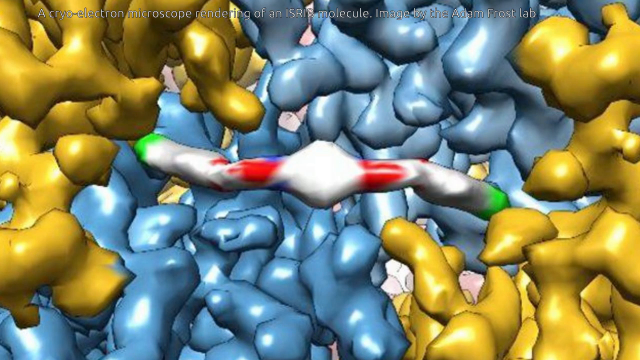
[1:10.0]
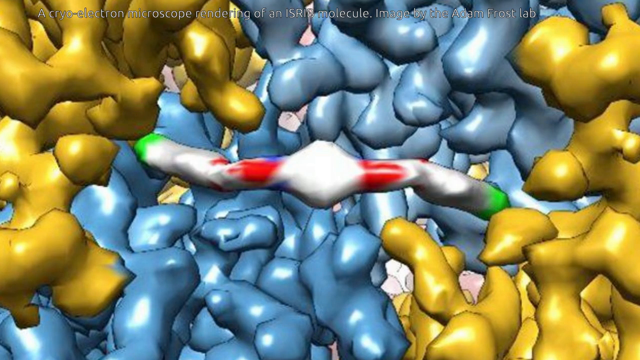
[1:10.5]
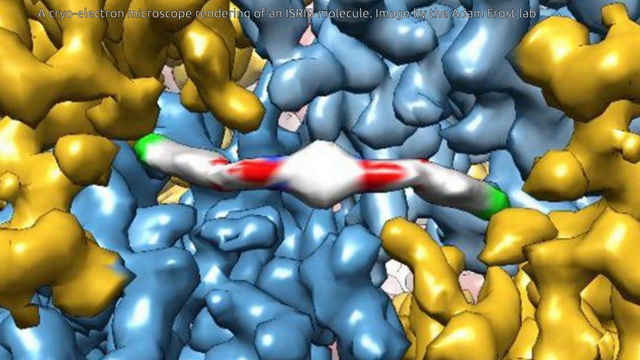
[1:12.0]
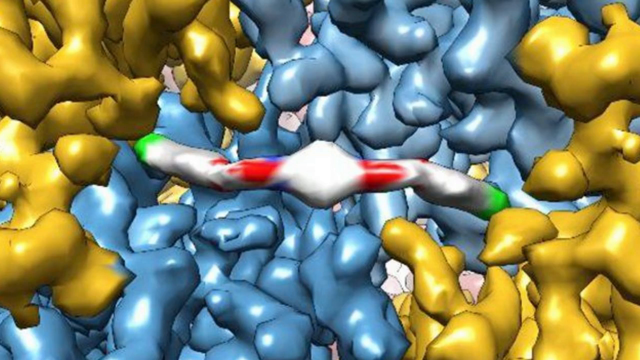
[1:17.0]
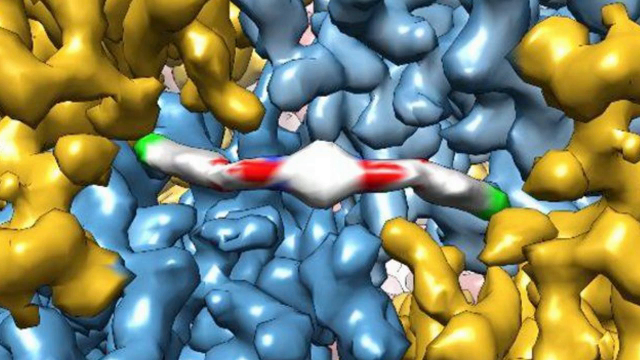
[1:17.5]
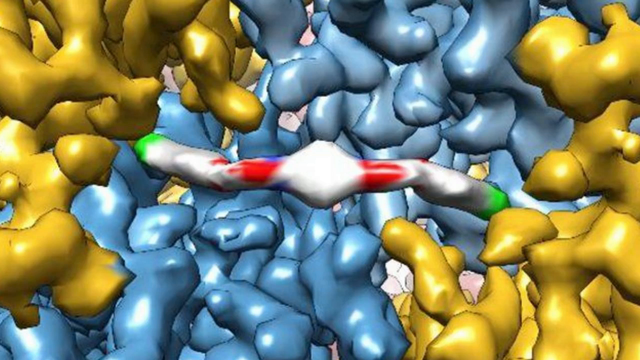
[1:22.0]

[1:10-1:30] The graphic of blue and yellow clusters with the band in the middle remains on screen. At the very top, in very tiny white script, it reads "a cryo-electron microscope rendering of an ISRIS molecule" and "image by the Axum Frost Lab". There is an area of yellow to the left; the clusters are blue, a gray-blue in the middle, and a mustard-like golden yellow on the right and left. The white tube is irregularly shaped, bumpy and lumpy, with a bulge in the middle and some red and green highlight.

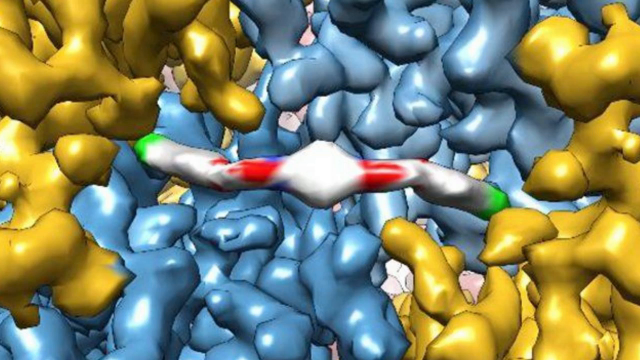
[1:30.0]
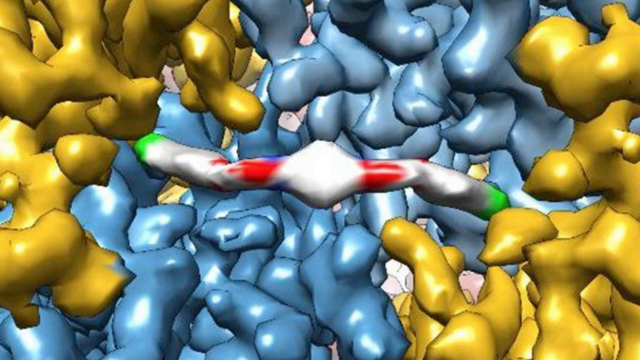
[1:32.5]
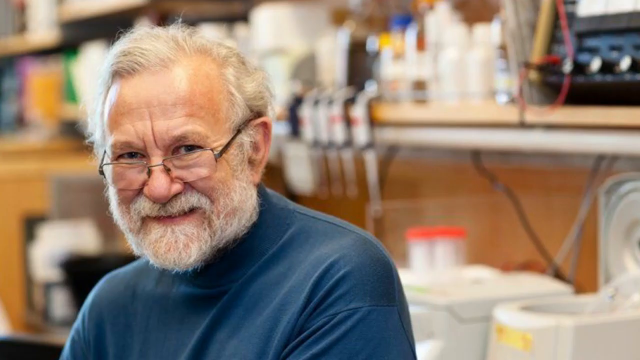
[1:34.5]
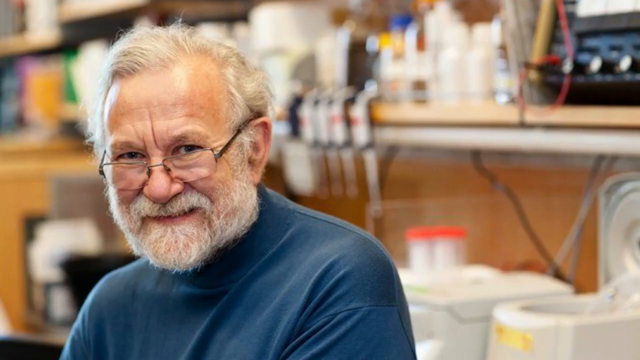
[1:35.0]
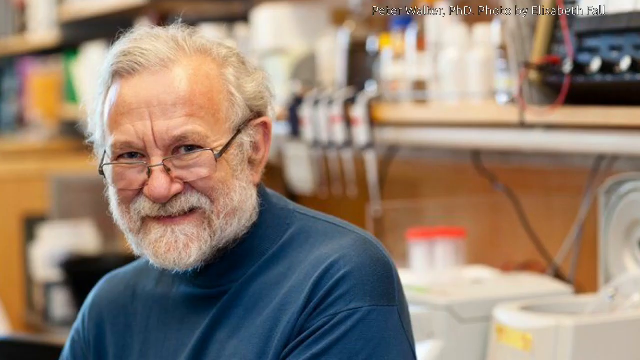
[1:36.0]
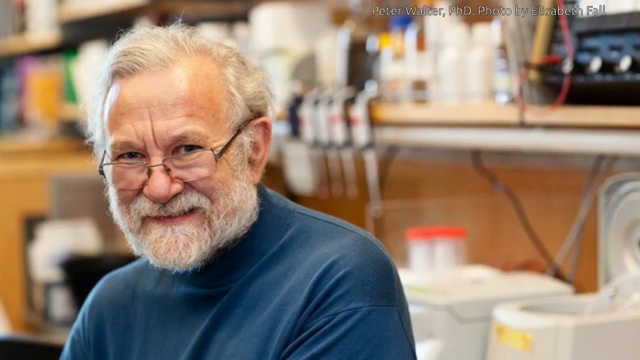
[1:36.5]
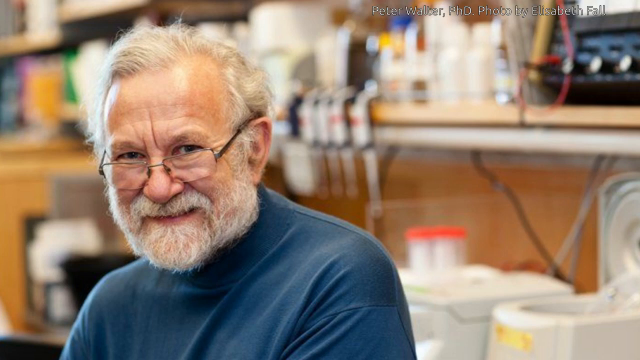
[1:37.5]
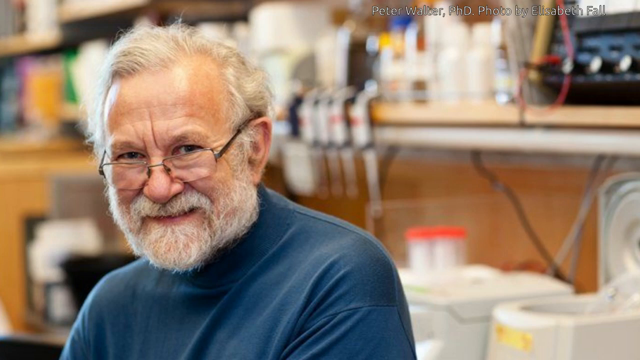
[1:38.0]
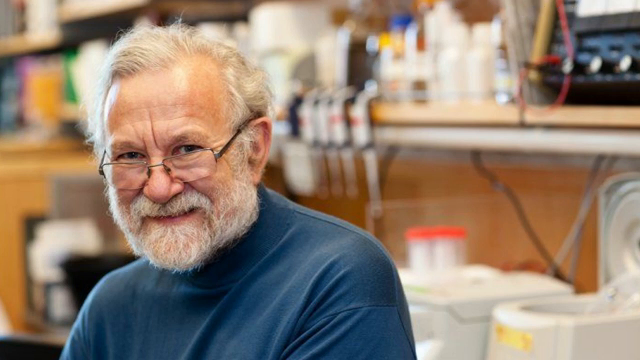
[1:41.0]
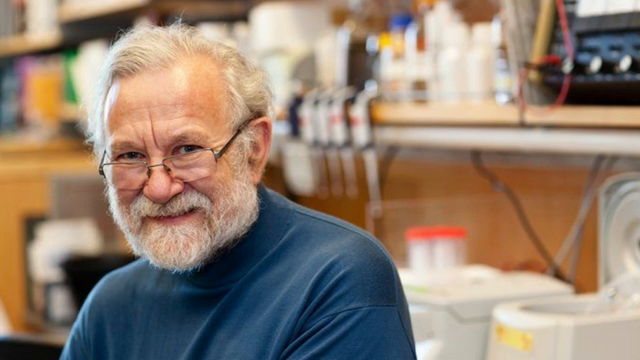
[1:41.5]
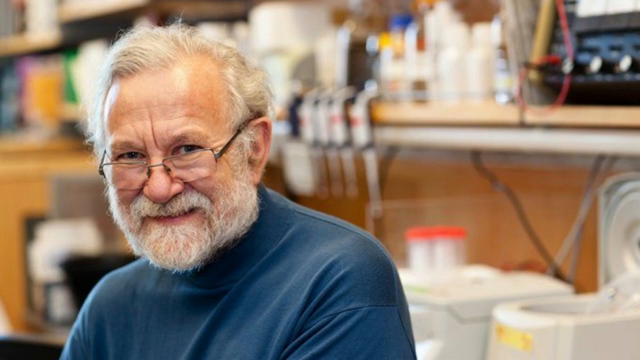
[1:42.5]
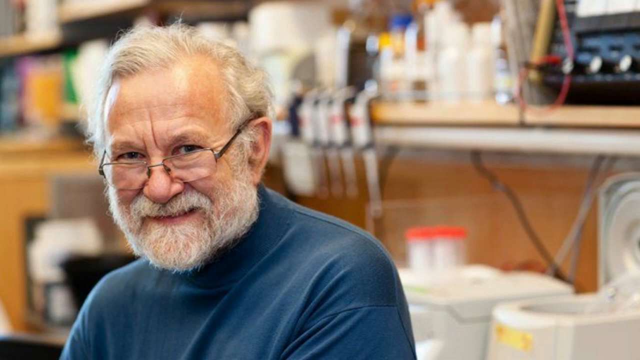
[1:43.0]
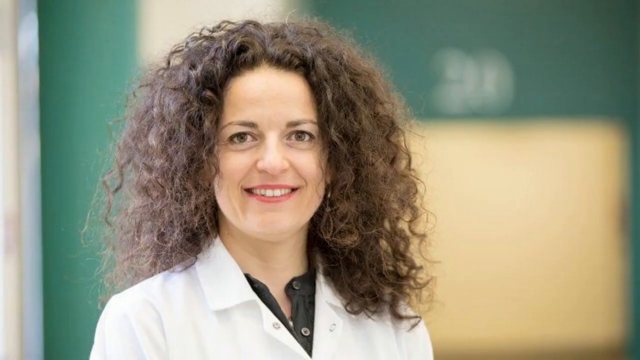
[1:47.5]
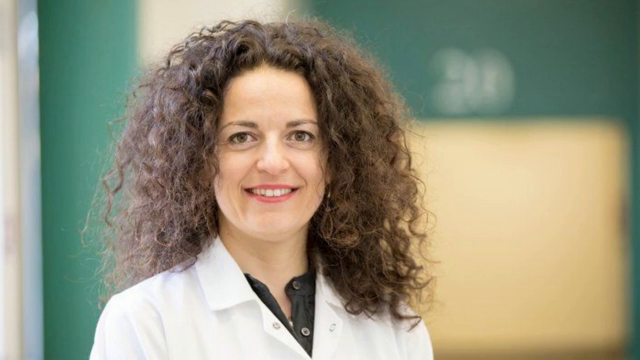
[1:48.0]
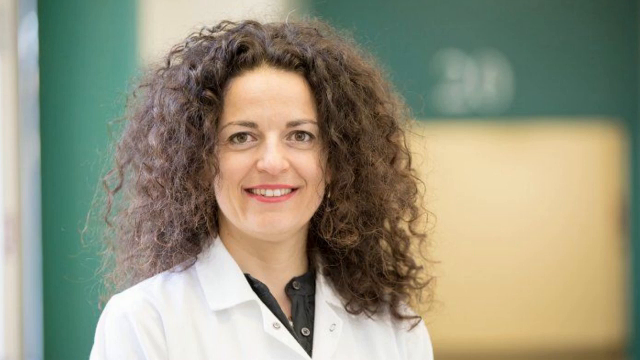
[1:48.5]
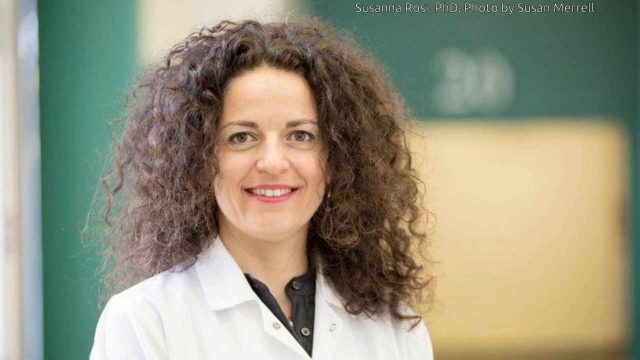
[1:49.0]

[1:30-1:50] The molecule picture gives way to a photo of a smiling man with gray hair, probably about 65 to 70 years old, with a white beard and mustache and wire glasses, looking over the top of them. He wears a darker blue tank top turtleneck and is on the left side of the image. He is possibly in an office, with an out-of-focus background of things typically seen in a lab or office. The video then switches to a picture of a smiling, happy-looking Caucasian woman with frizzy dark brown hair, slightly left of center. Her very curly, frizzy hair is parted in the middle and comes down on either side to just below her shoulders. She has red lipstick and dark eyes and wears a white lab coat over a black button-down shirt, shown from the shoulders up. Behind her is a blurry, out-of-focus green background with a yellowish triangle or rectangle to her right. A little sunlight comes in from the left, lightening that side.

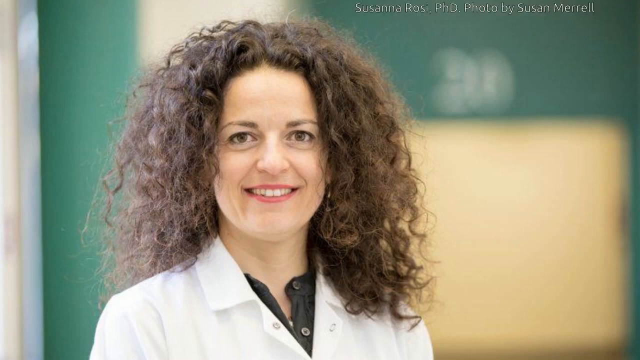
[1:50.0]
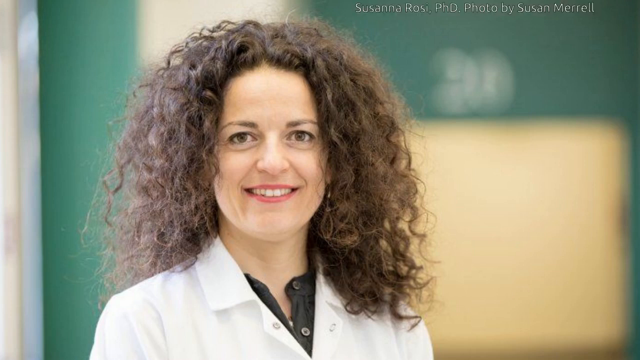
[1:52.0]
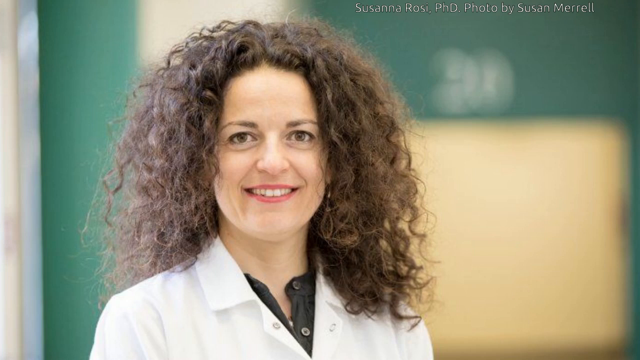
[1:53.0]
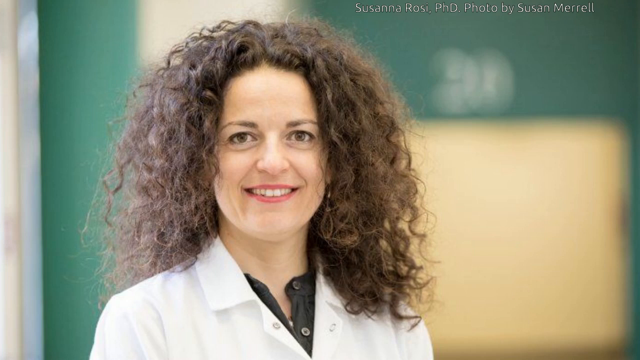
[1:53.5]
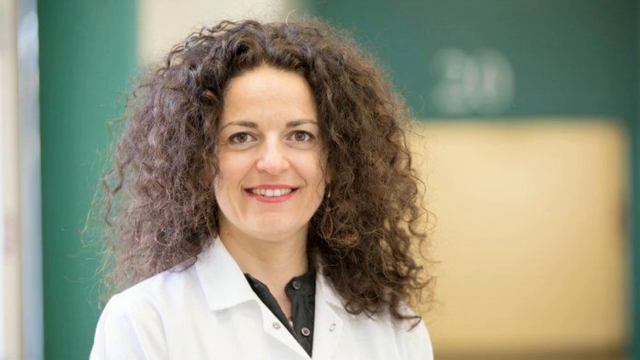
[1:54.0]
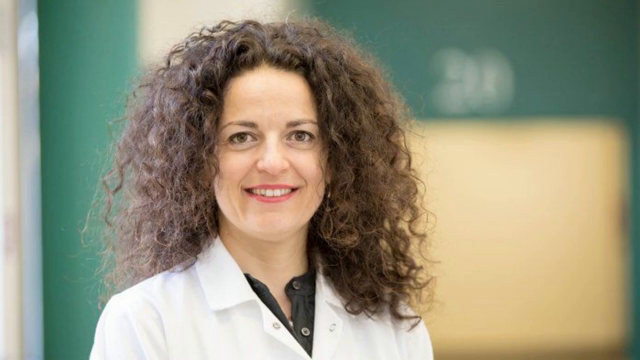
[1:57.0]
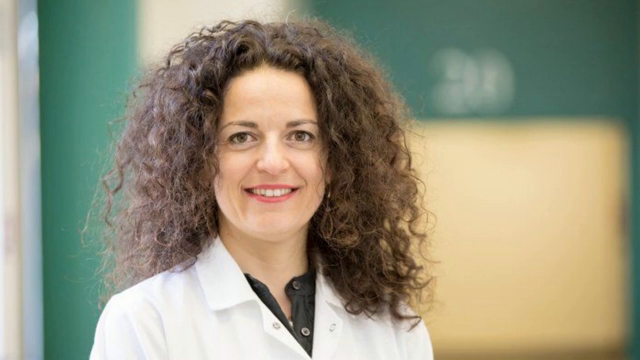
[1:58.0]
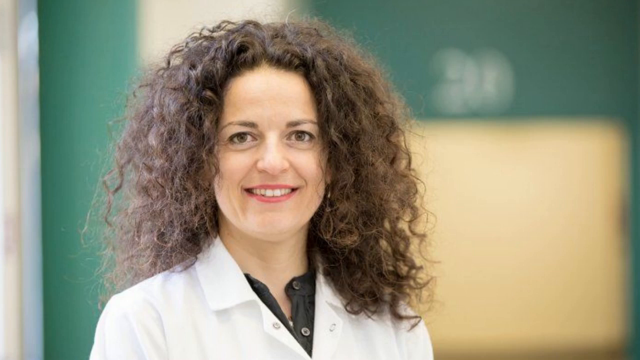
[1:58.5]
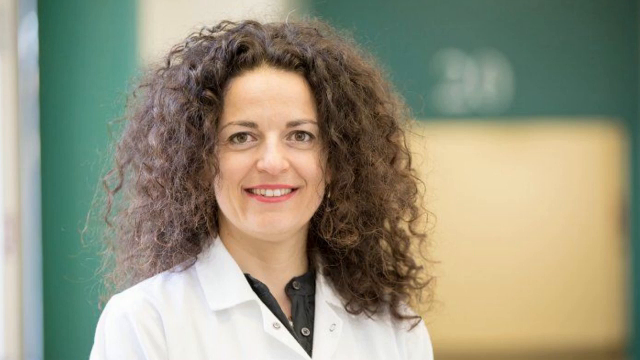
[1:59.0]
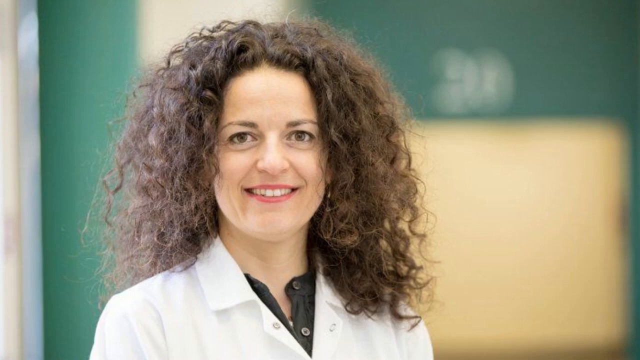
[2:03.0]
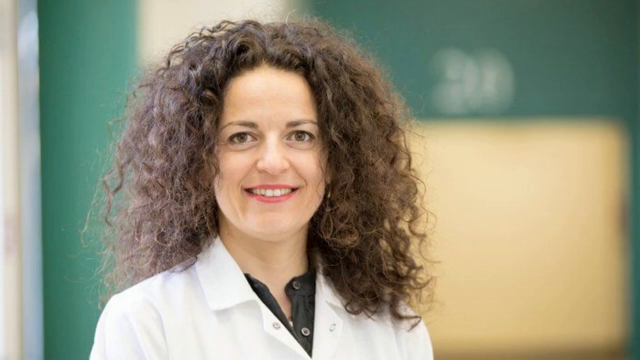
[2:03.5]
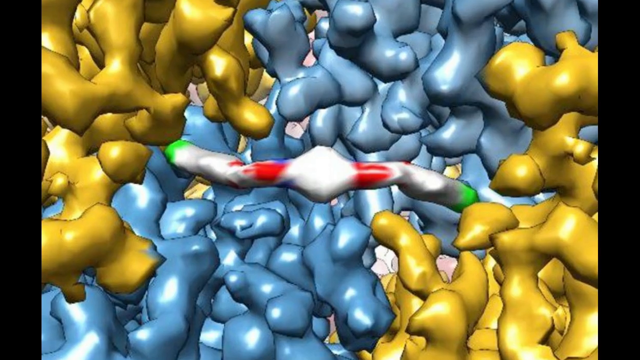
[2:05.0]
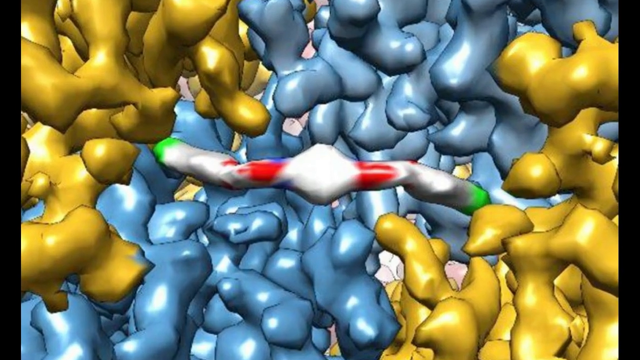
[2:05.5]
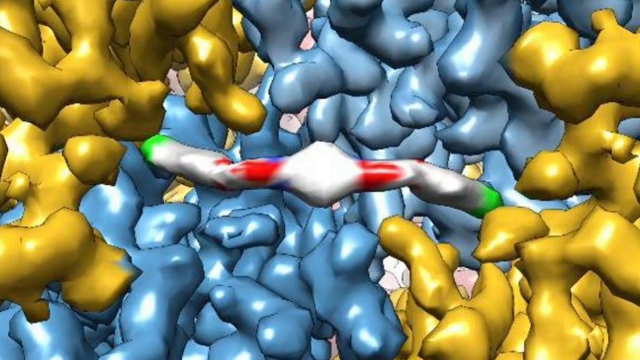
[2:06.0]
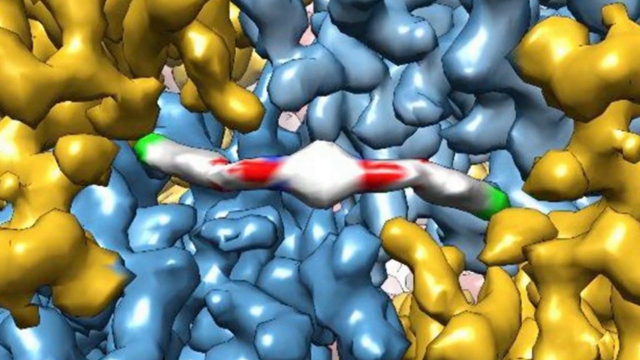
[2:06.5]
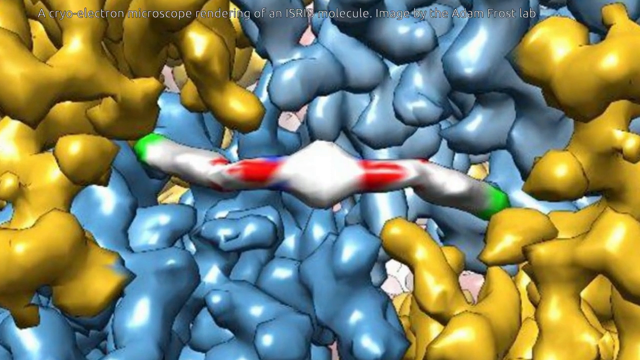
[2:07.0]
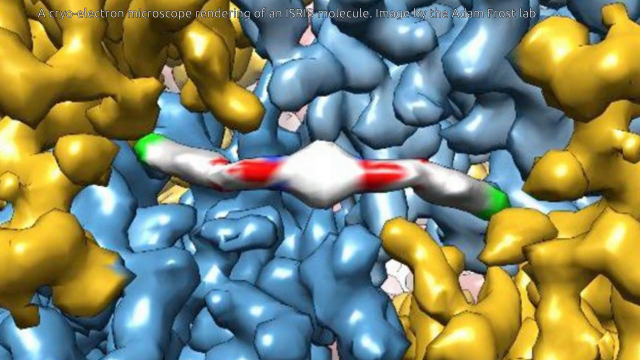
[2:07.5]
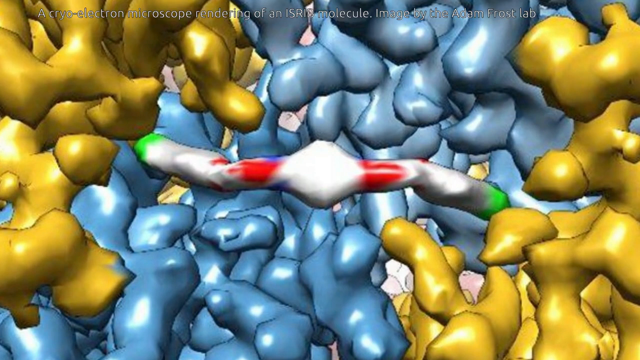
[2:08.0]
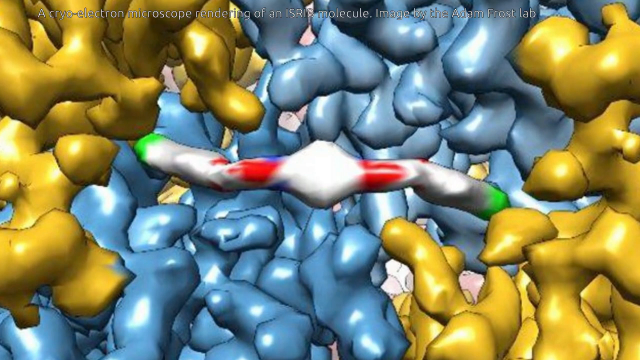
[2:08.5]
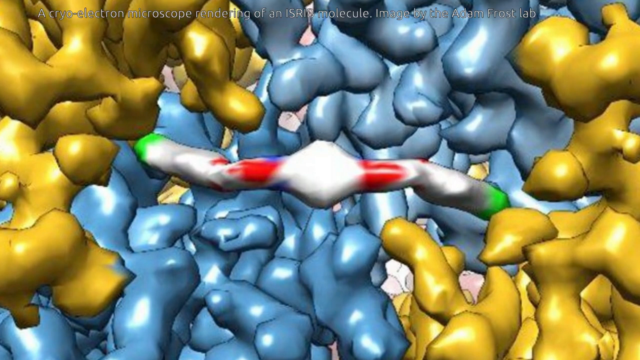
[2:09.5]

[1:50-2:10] In the upper right of the woman's photo is a credit in very tiny, light white text: "Susanna Rossi PhD photo by Susan Merrell". She is still smiling at the camera. In the out-of-focus background there is a tan square to her right, something like a doorway, with what might be a couple of blurry, large white letters or numbers above it; over her head is another square of the same color, and the rest is a green wall. On the left, a little tan creeps in along with a gray or silver bar. The video then returns to the microscope molecule graphic, panning in close on the white bulging part in the middle.